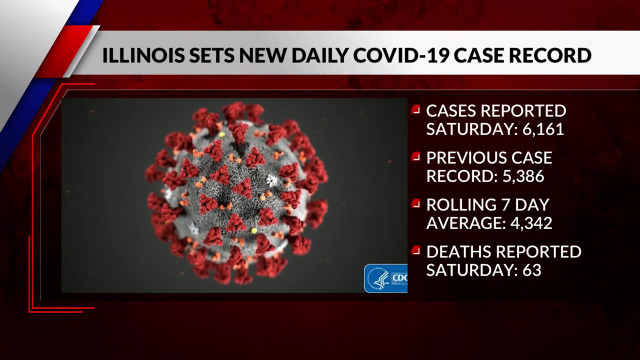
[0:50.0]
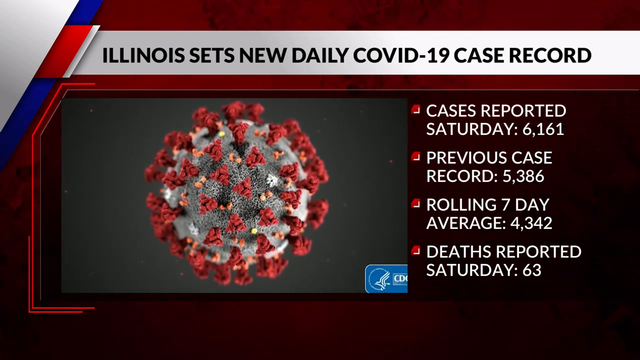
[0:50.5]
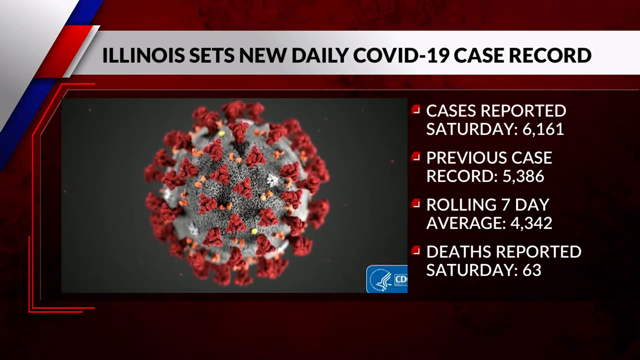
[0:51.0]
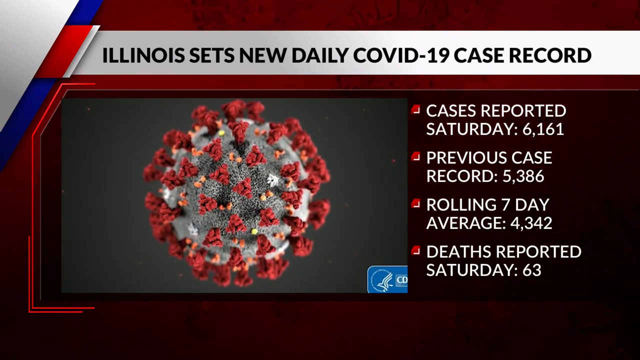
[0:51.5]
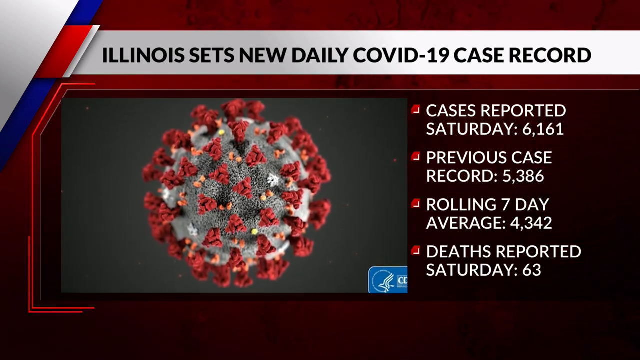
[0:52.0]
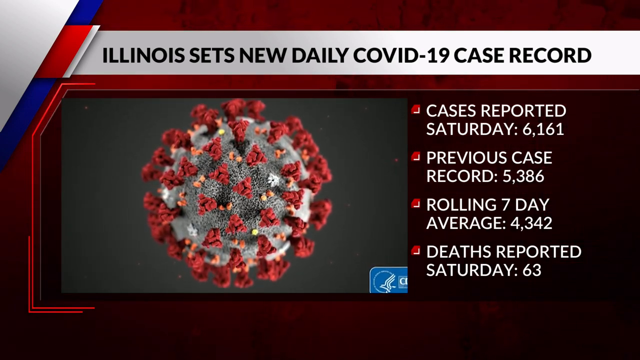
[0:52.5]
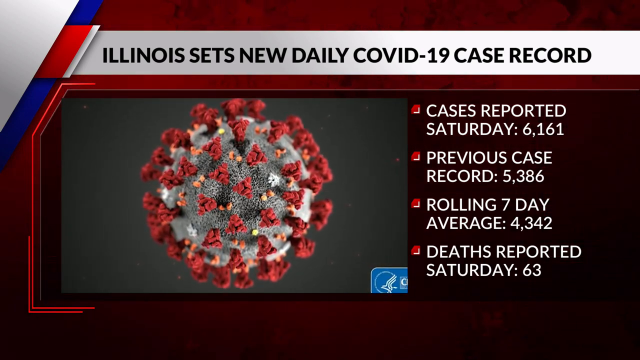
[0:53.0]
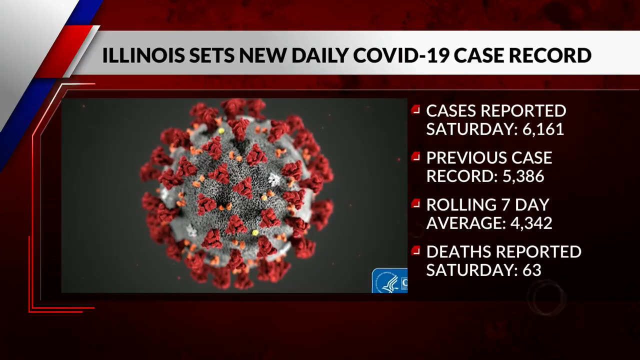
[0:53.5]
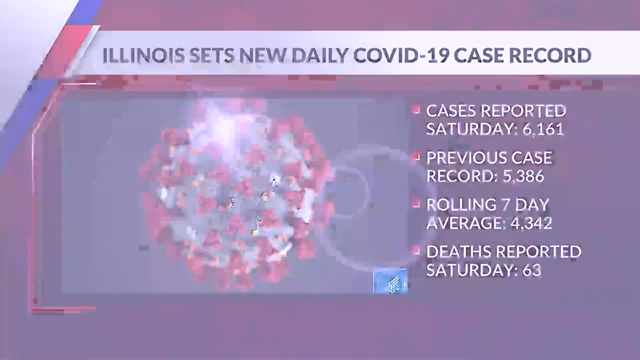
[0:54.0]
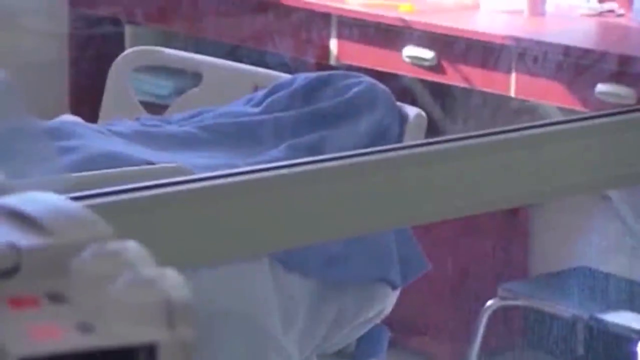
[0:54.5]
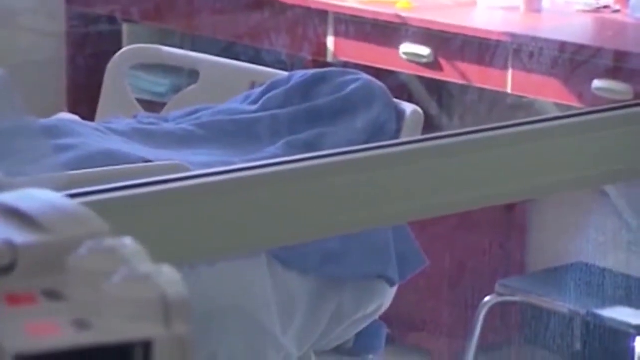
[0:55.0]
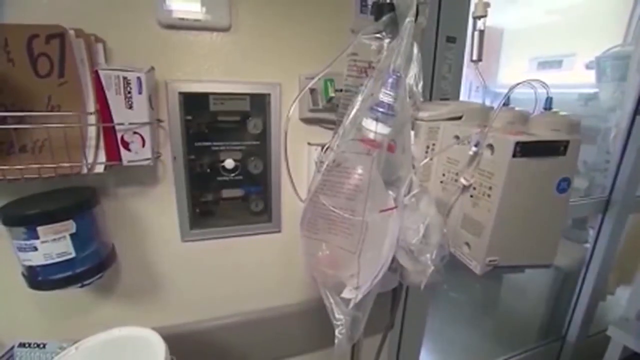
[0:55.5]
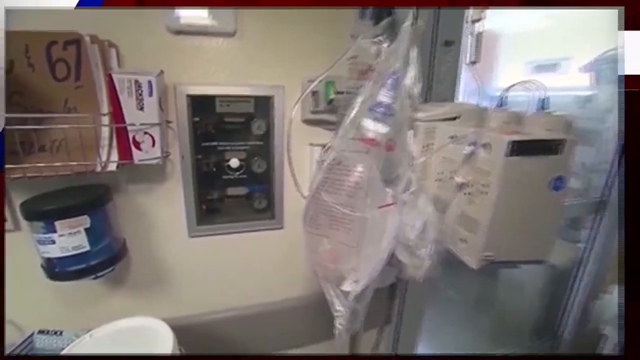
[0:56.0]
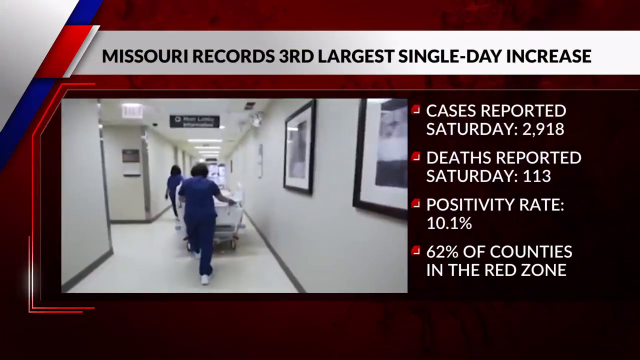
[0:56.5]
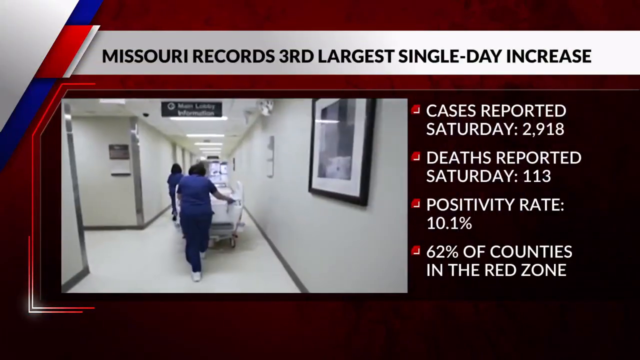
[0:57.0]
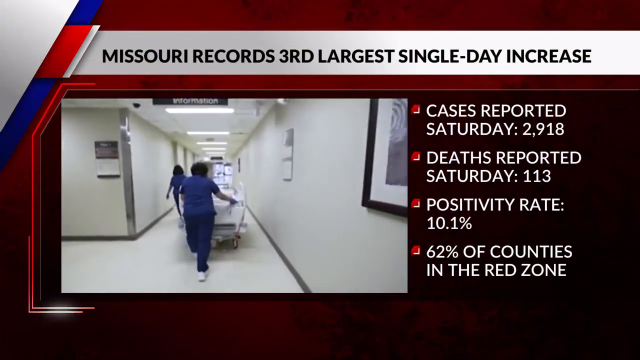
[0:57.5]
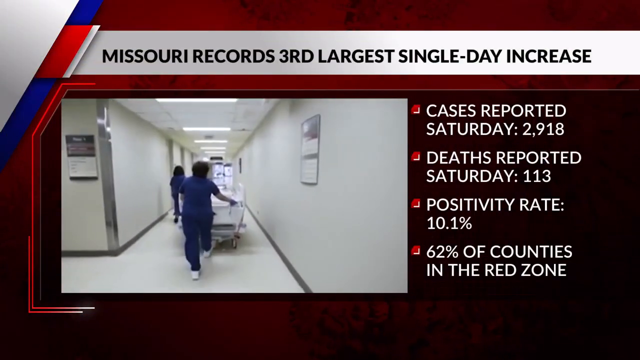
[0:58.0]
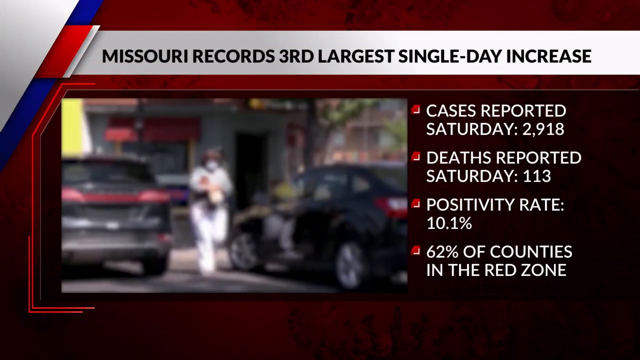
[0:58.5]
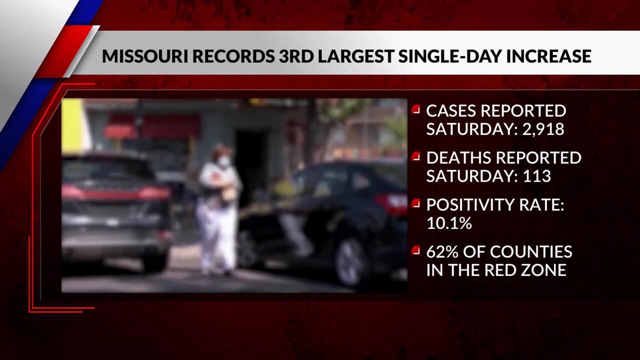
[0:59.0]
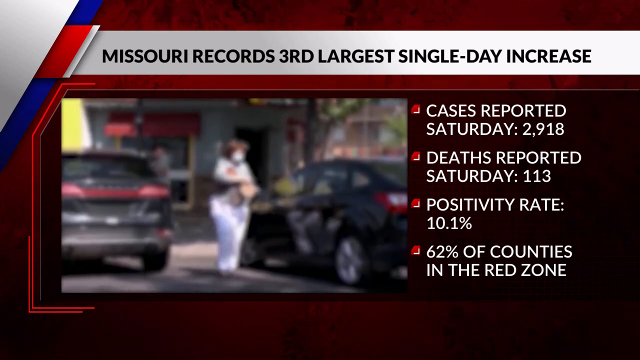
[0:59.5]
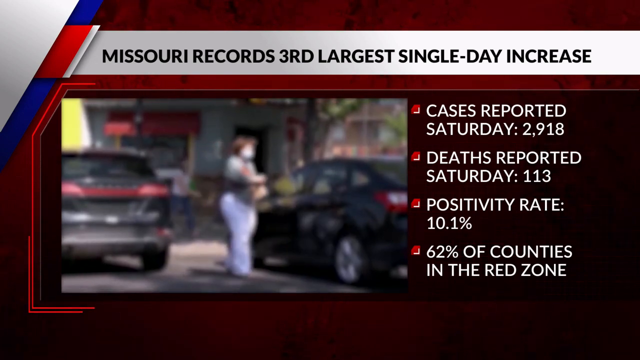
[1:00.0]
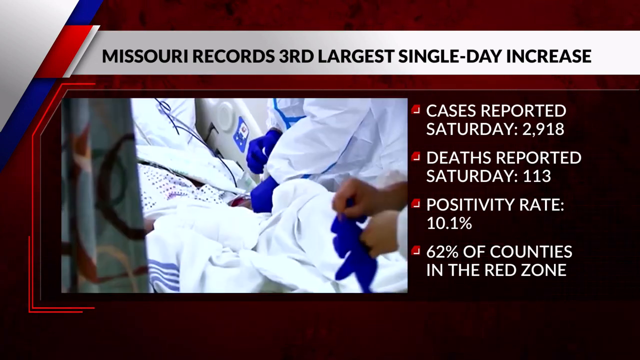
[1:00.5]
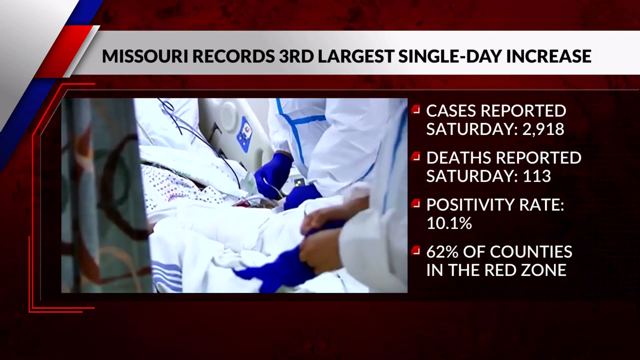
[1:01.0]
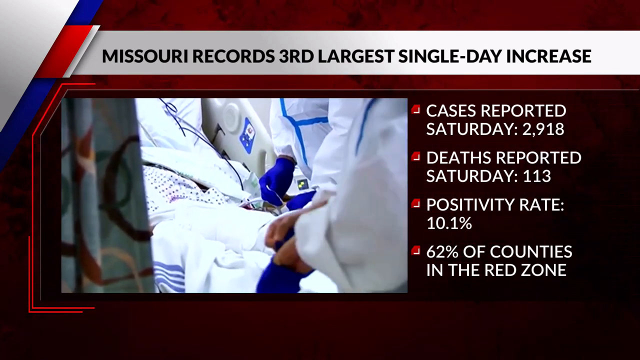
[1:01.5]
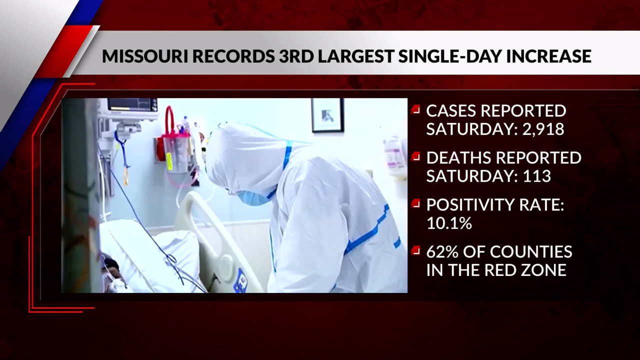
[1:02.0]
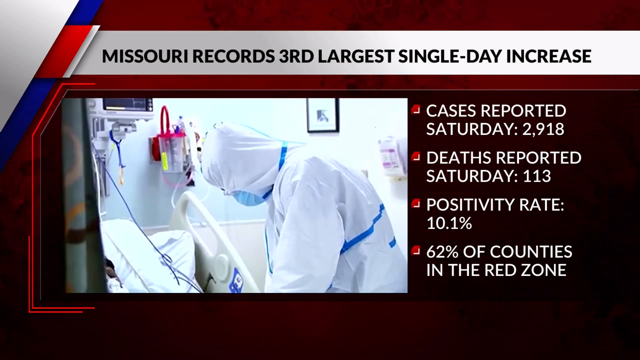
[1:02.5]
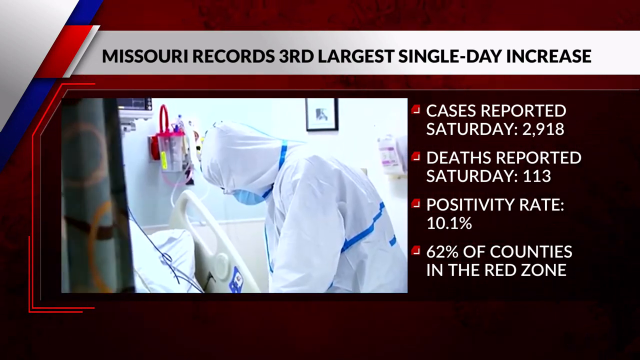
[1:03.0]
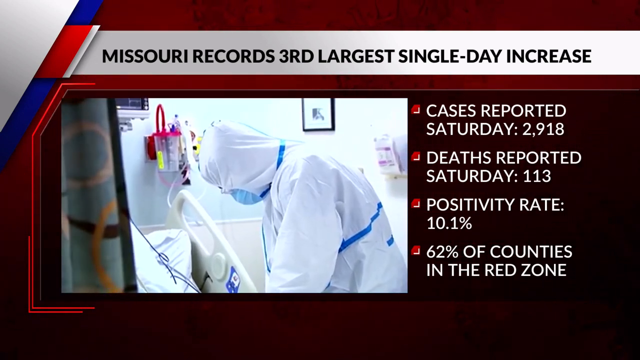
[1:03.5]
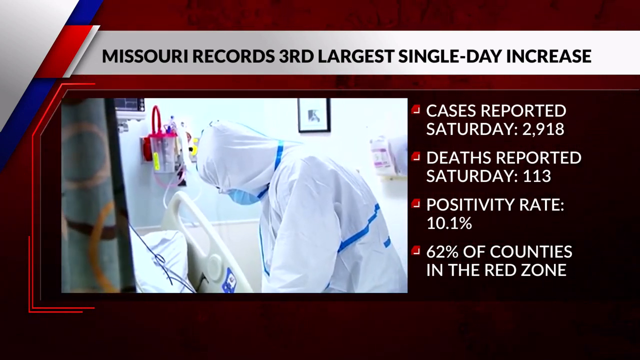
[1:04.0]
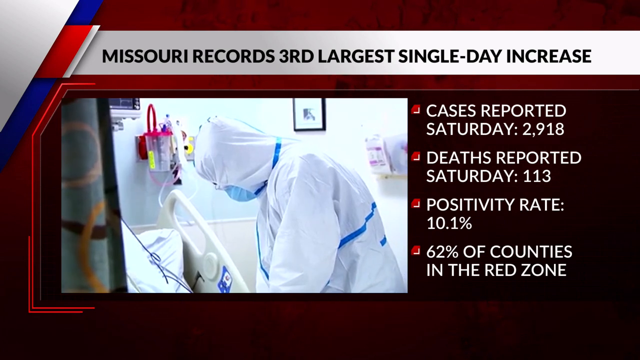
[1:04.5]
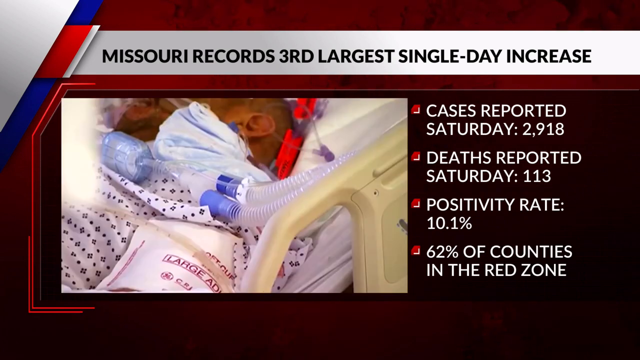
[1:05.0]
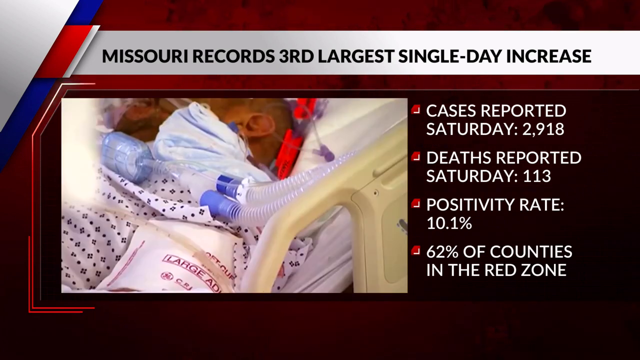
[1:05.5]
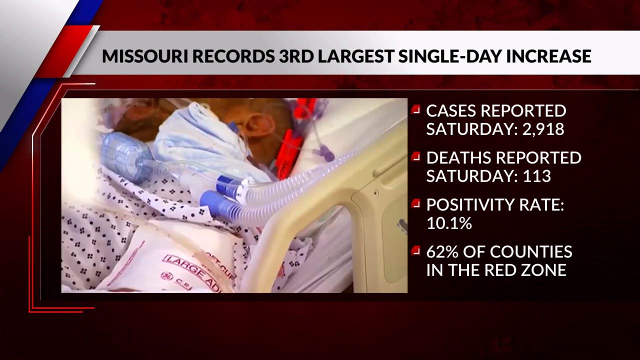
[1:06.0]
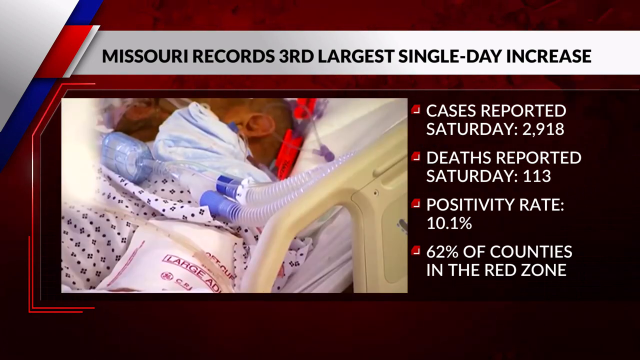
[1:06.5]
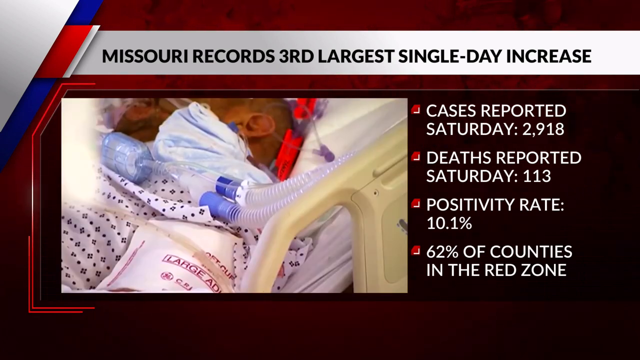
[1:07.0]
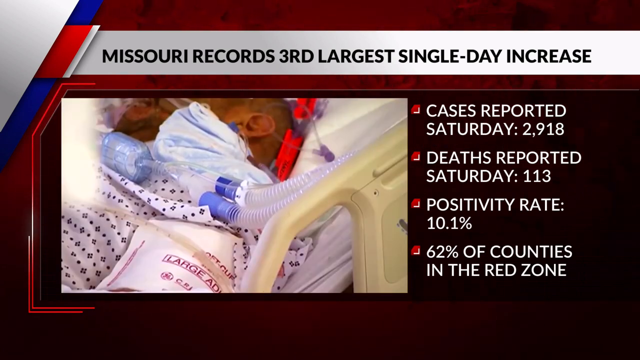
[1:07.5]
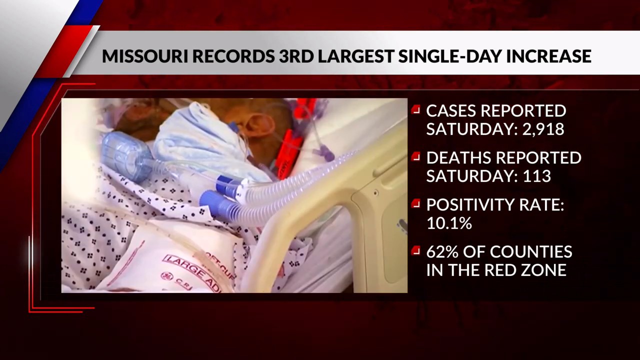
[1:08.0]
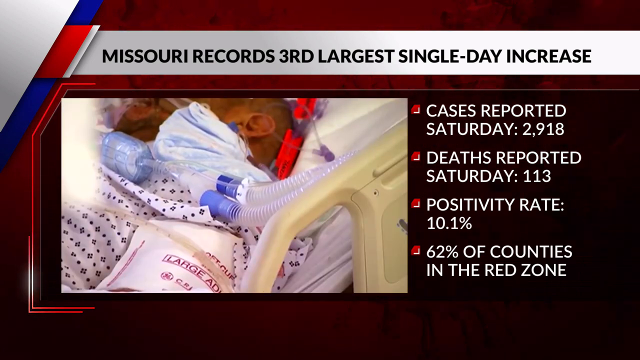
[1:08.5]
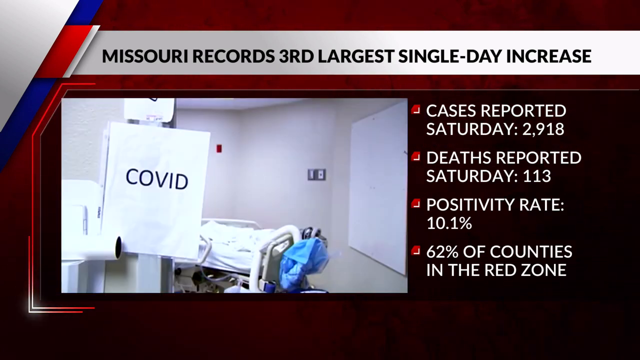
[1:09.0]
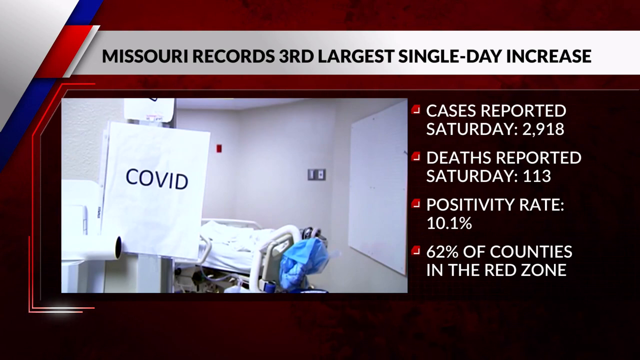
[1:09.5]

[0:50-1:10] The statistics on screen show the cases and deaths in the area, with reported cases having increased. The scene then moves to a hospital, where nurses push what appears to be a sickbed. A new heading reads "Missouri records a third largest single day increase", followed by bullet points: cases reported Saturday at 2,918, deaths reported Saturday at 118, a positivity rate of 10.1%, and 62% of the counties in the red zone.